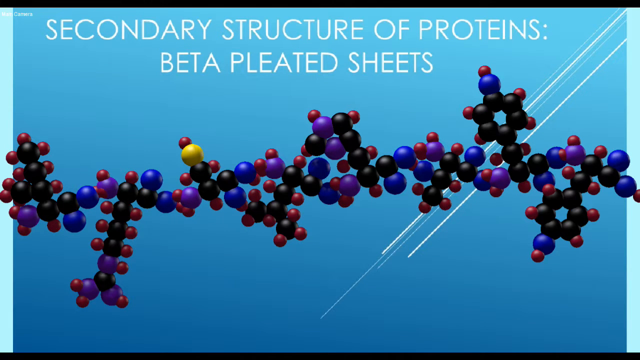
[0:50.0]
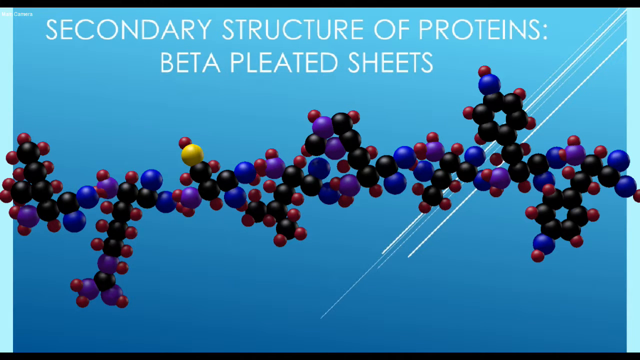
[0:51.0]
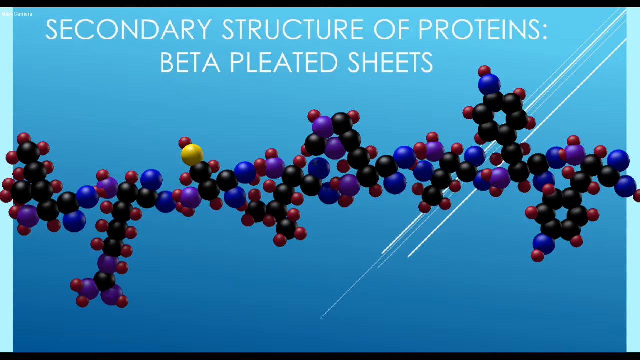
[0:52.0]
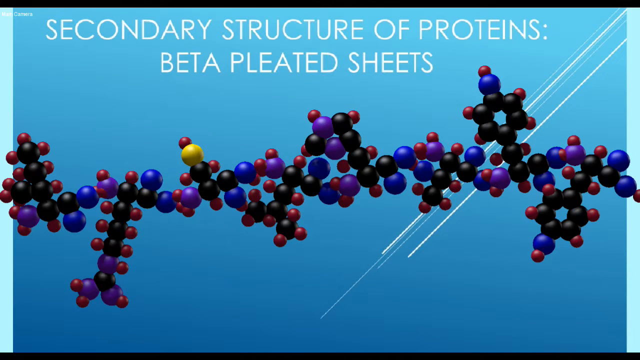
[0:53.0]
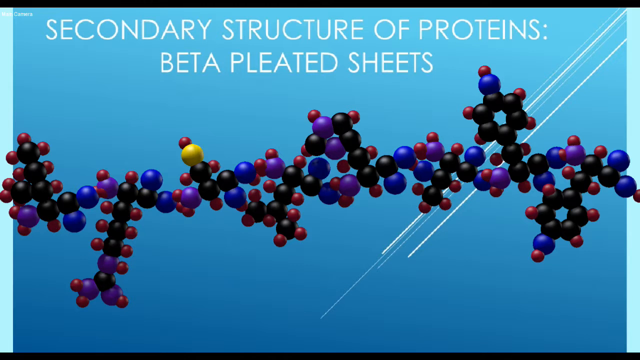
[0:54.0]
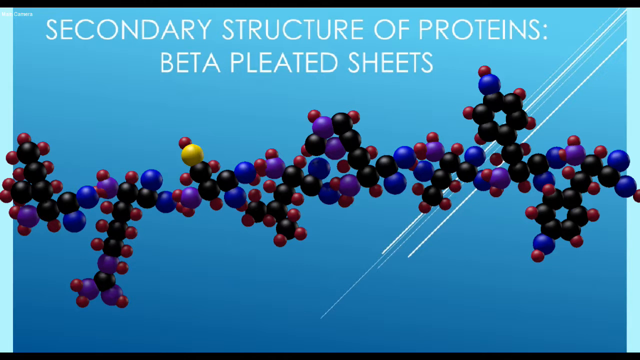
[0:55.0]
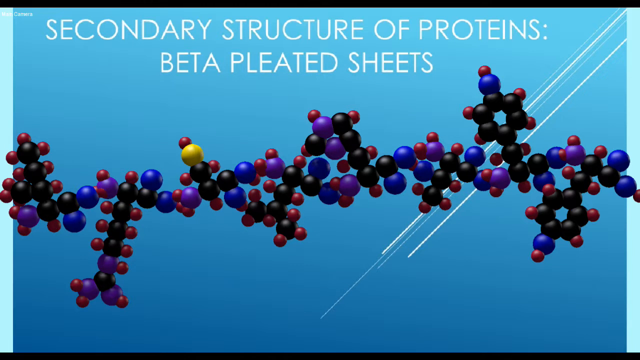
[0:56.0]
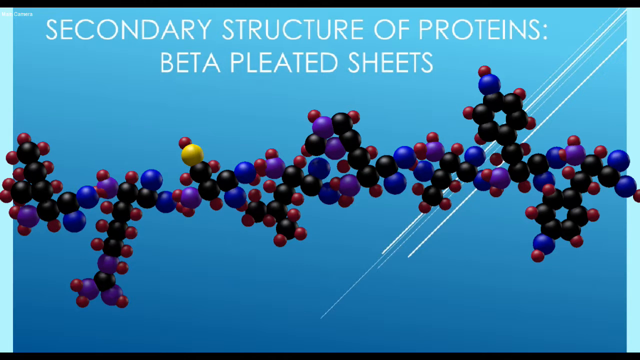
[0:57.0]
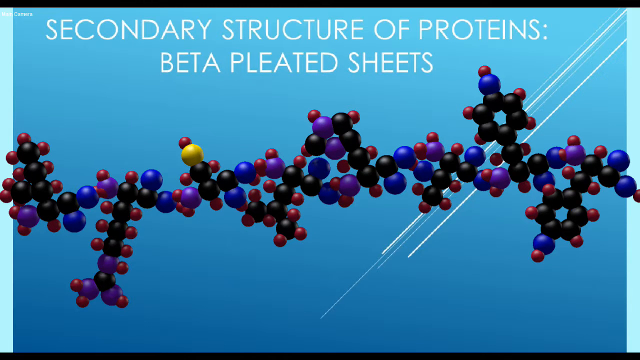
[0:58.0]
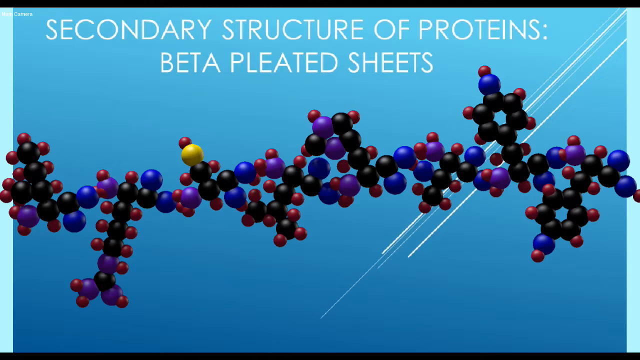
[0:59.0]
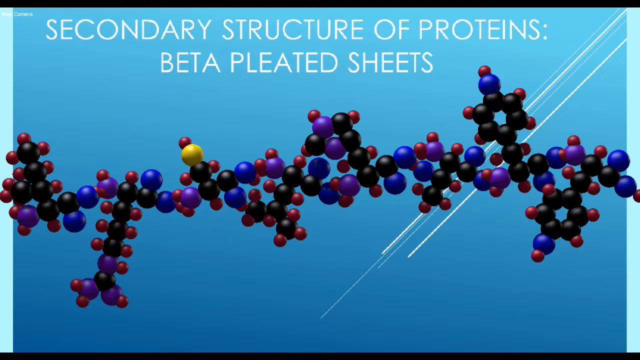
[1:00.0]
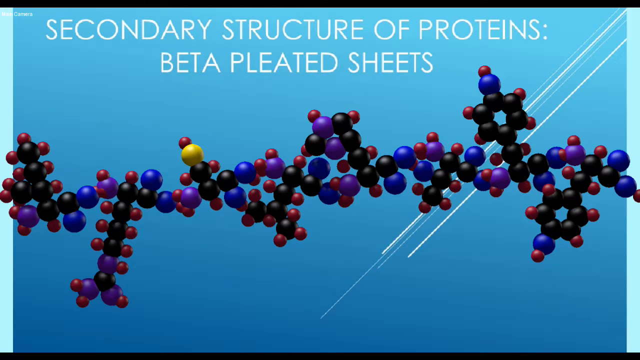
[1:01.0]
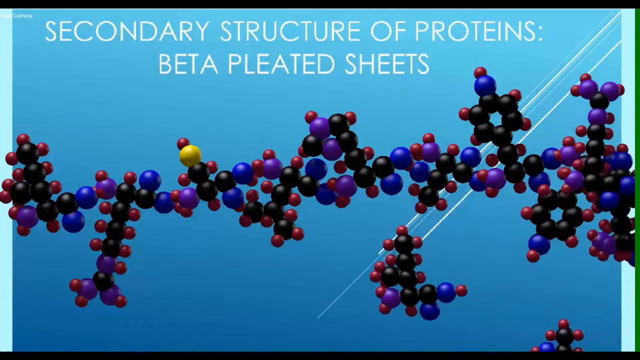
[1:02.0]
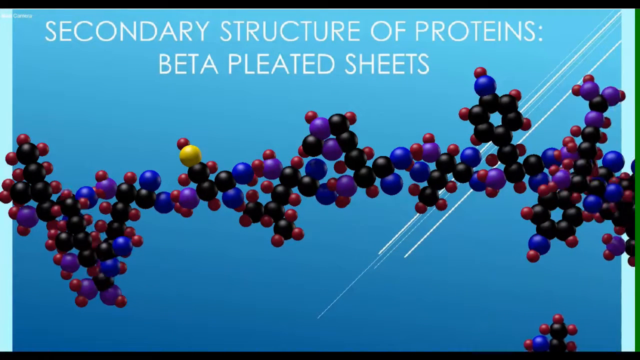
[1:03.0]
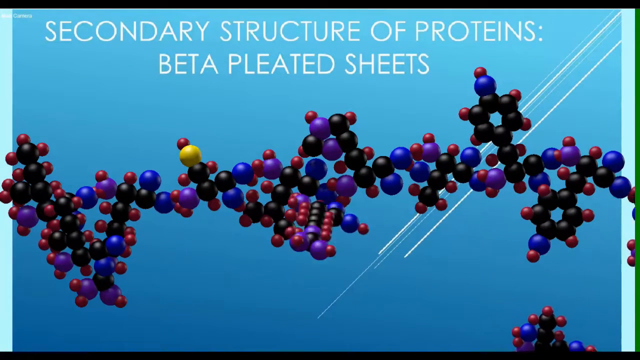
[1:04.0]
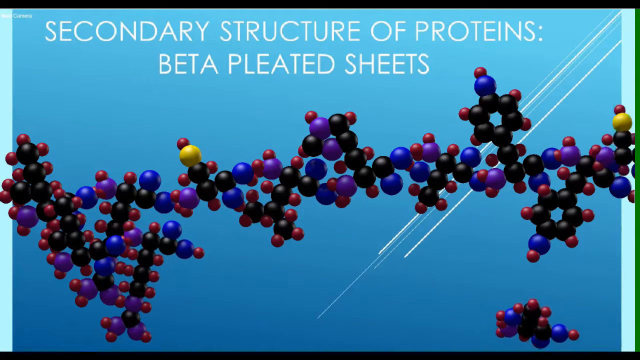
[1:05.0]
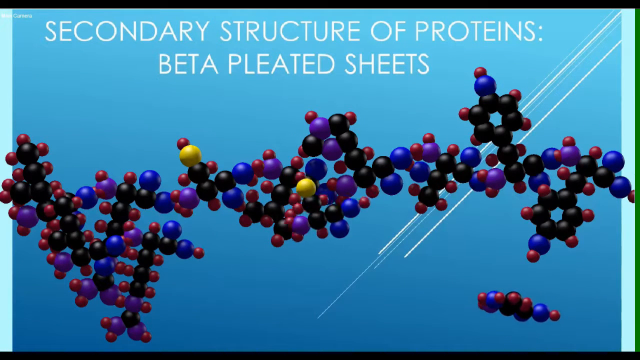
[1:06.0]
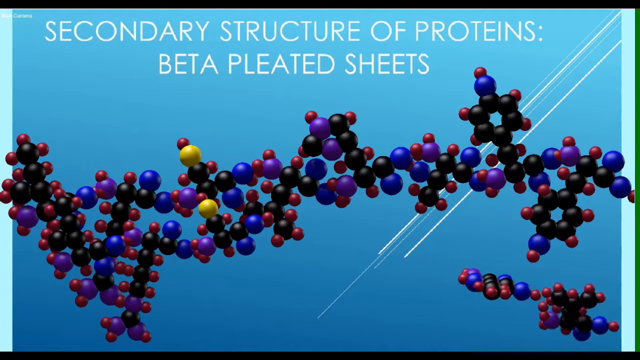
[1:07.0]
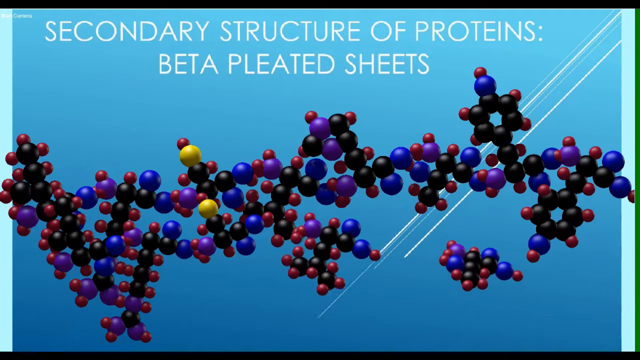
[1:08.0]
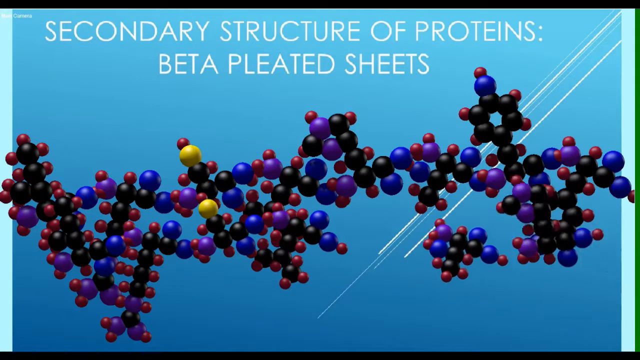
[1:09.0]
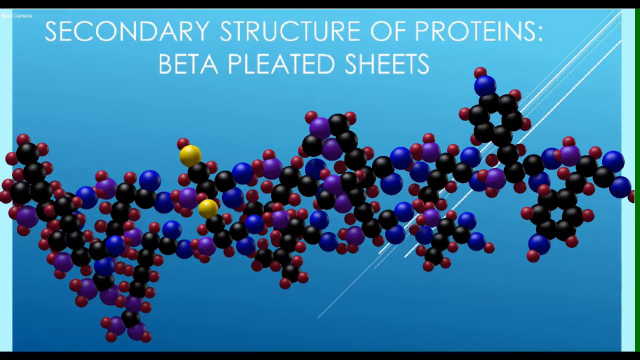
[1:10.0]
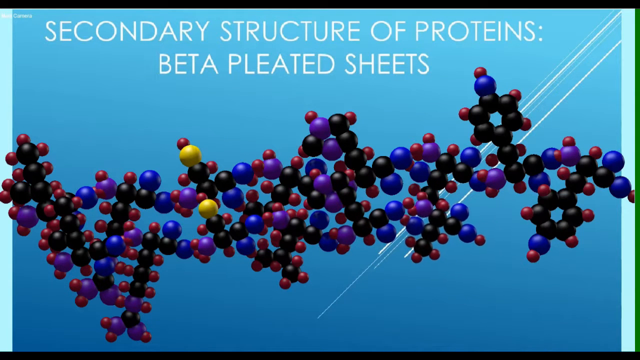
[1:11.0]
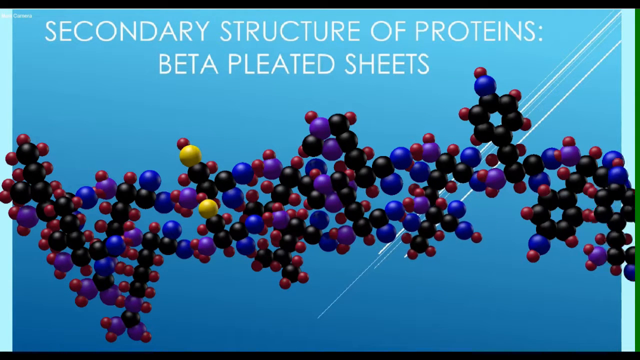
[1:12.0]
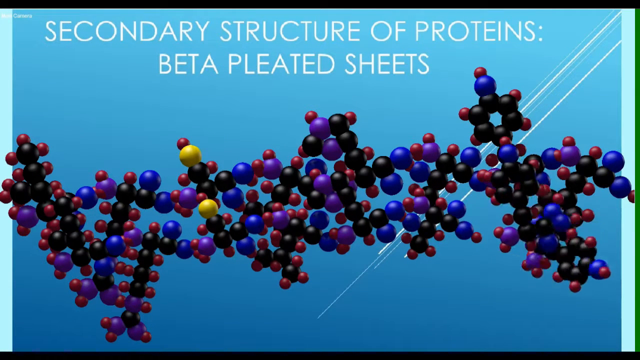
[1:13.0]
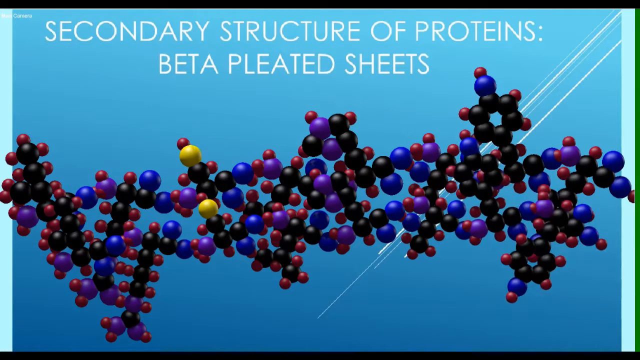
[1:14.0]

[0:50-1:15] The secondary structure of protein, beta-pleated sheets, stays on screen for quite a while. After about 10 seconds, other protein structures start coming in from the left side, in much the same colors of black, red, purple and blue, and eventually a yellow one appears close to the other yellow one. These structures are added onto the one already built, more and more of them, until they almost reach the right side, and then the video ends. The background is still blue, brighter at the top and darker at the bottom, getting black. A small white line at the top right runs down toward the middle, and a bit of green is visible on the right side.